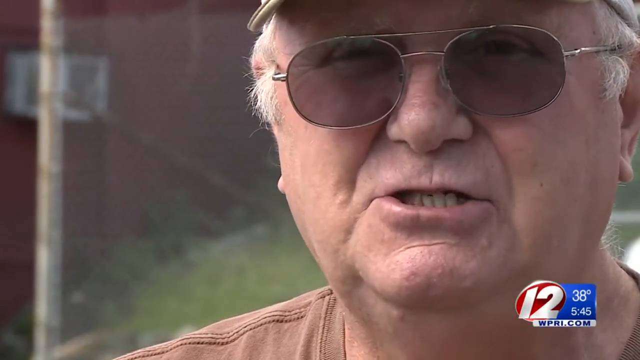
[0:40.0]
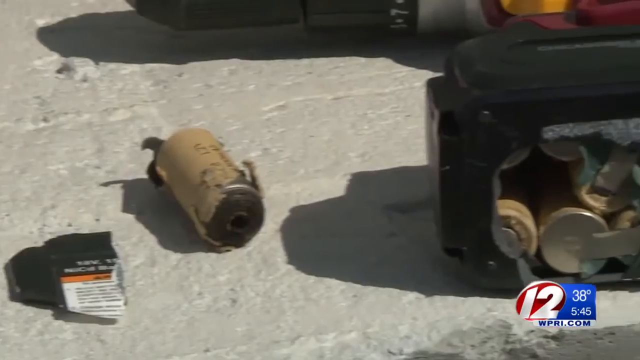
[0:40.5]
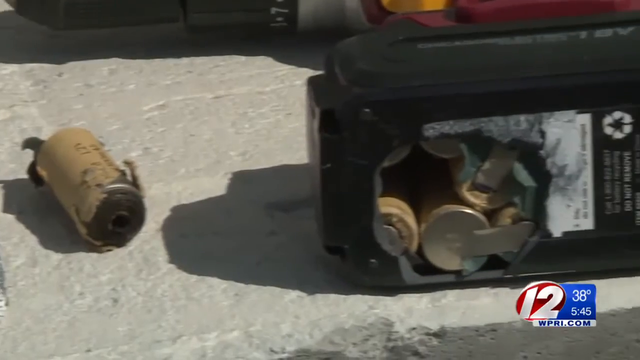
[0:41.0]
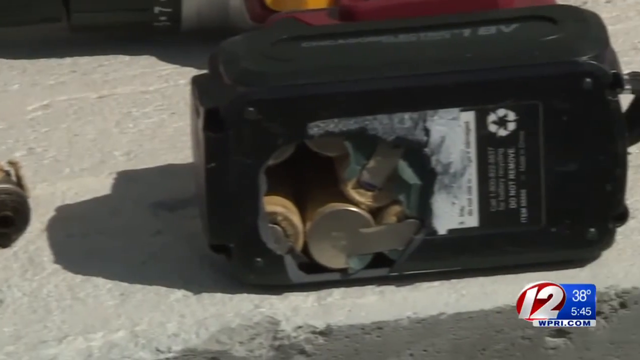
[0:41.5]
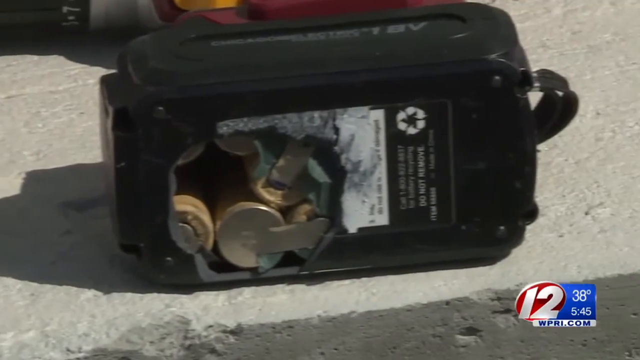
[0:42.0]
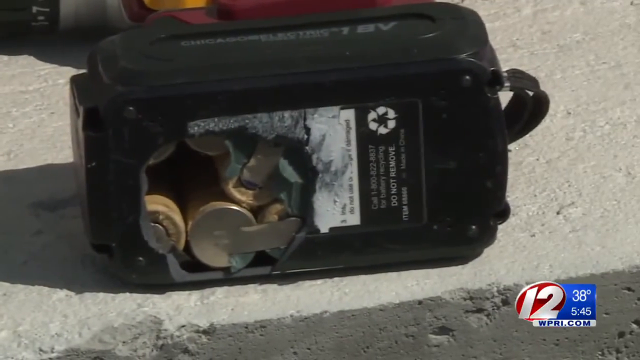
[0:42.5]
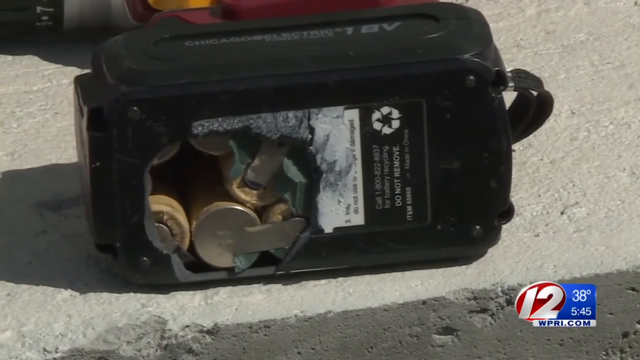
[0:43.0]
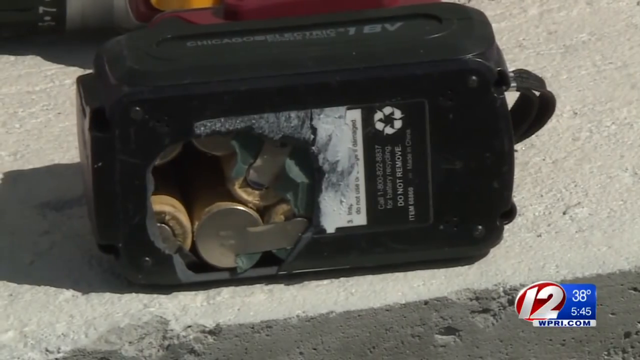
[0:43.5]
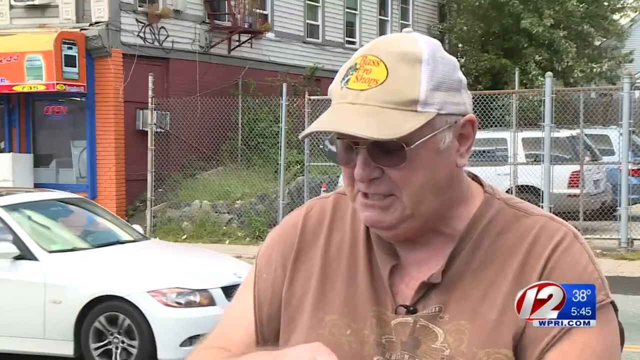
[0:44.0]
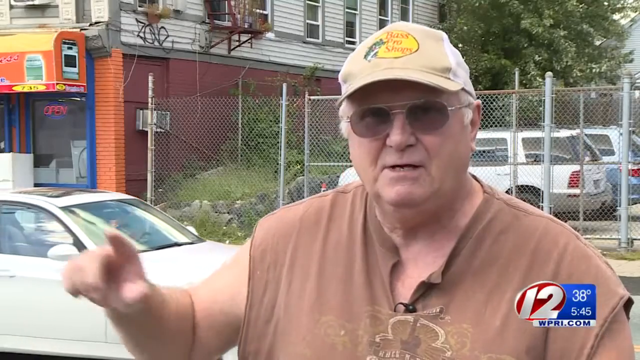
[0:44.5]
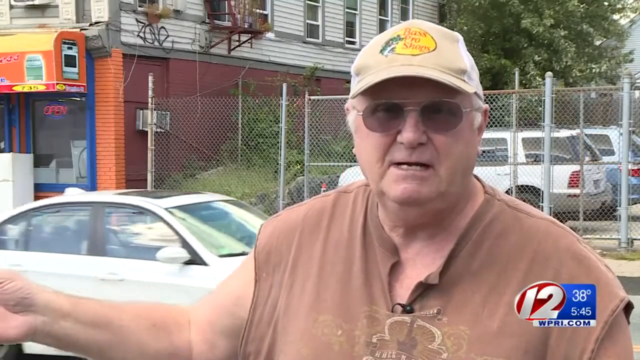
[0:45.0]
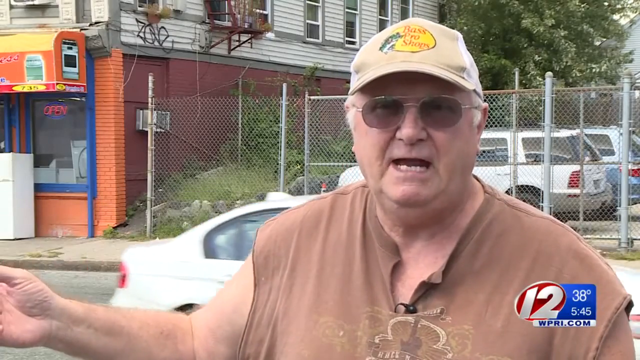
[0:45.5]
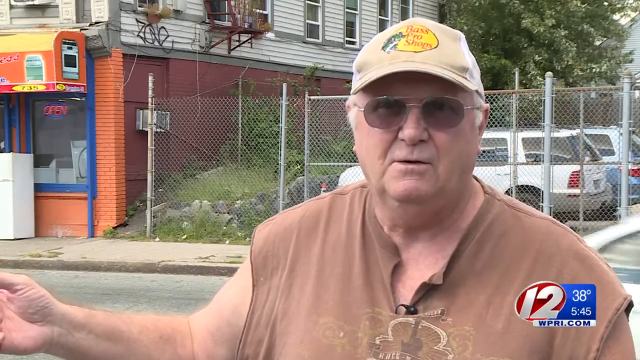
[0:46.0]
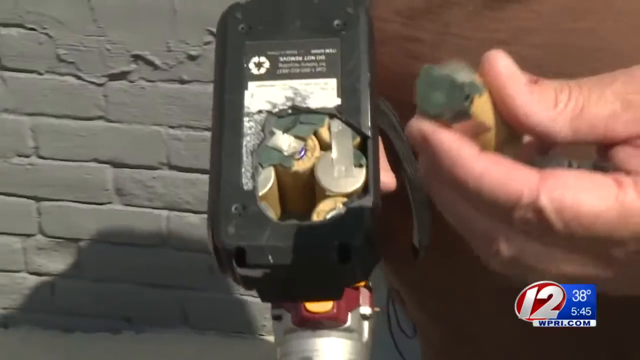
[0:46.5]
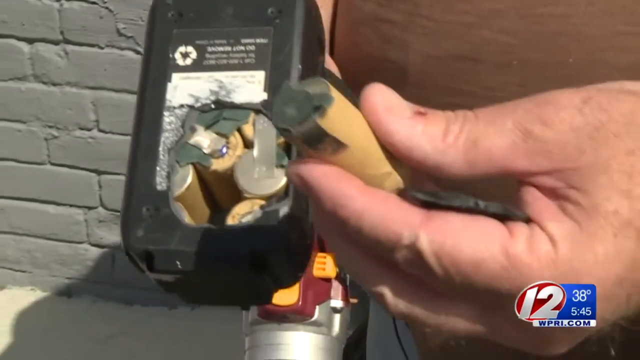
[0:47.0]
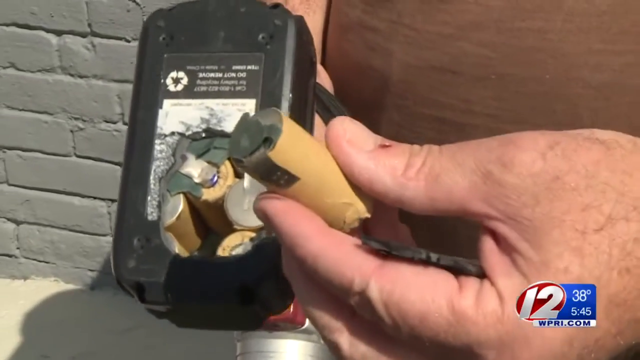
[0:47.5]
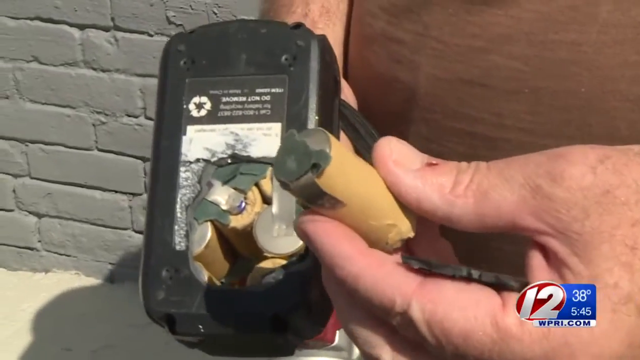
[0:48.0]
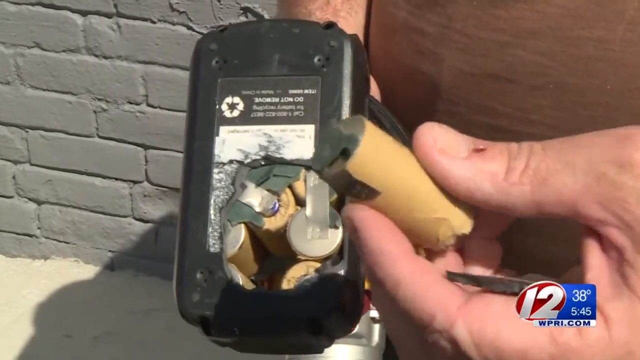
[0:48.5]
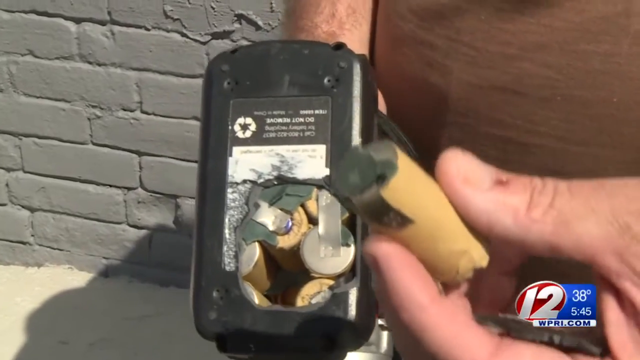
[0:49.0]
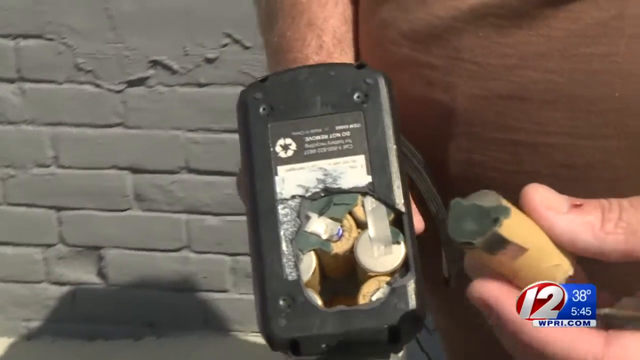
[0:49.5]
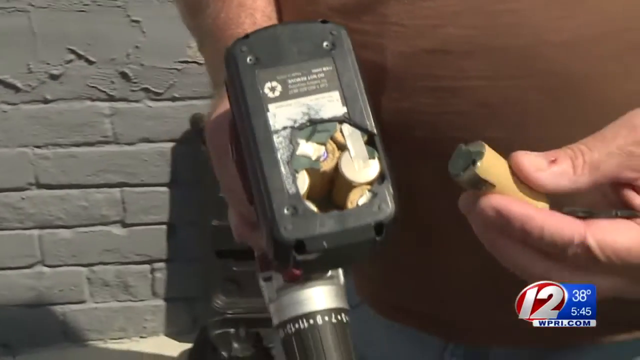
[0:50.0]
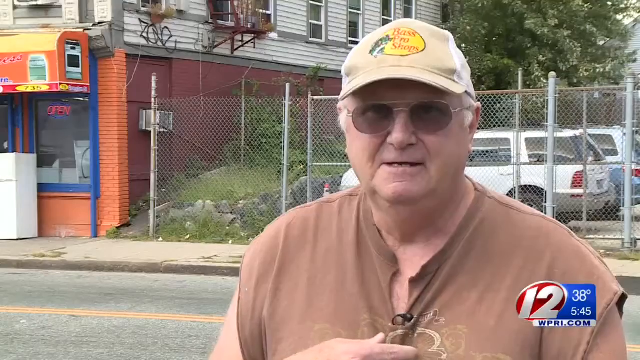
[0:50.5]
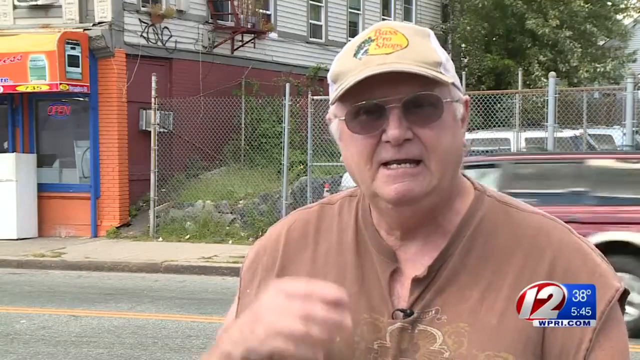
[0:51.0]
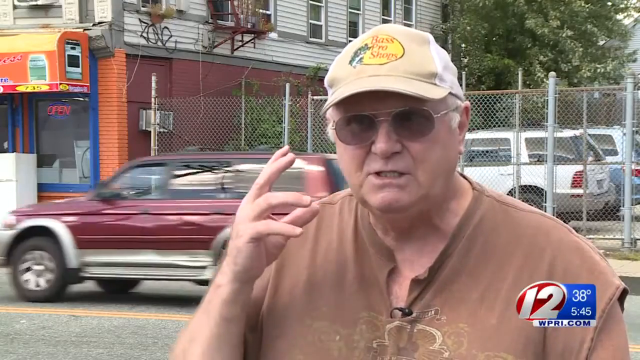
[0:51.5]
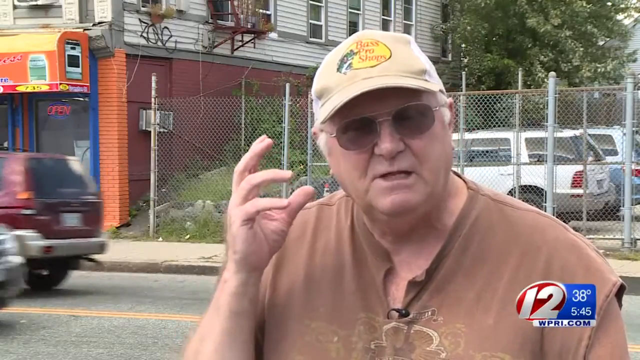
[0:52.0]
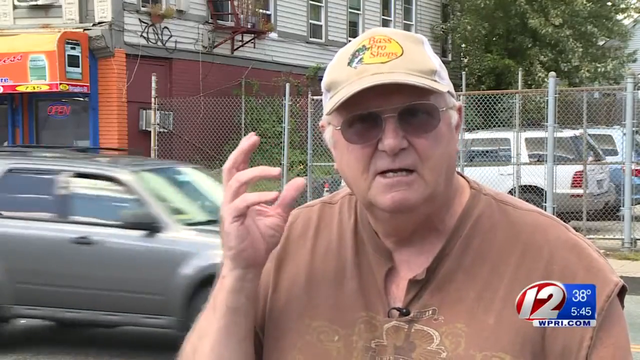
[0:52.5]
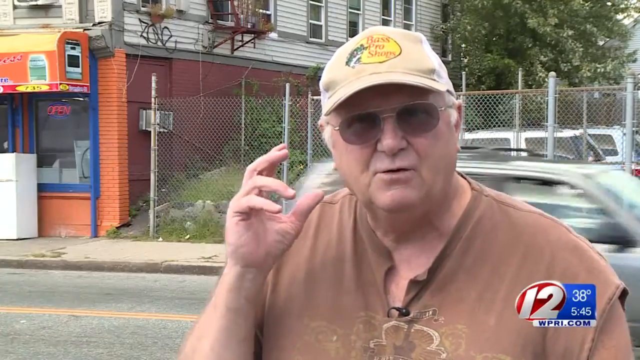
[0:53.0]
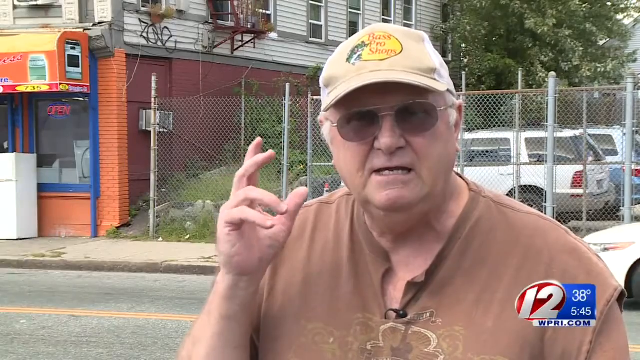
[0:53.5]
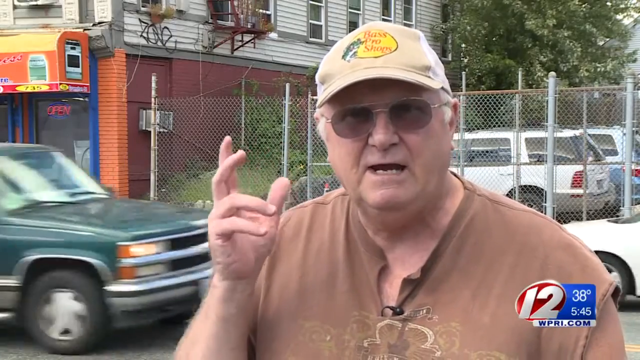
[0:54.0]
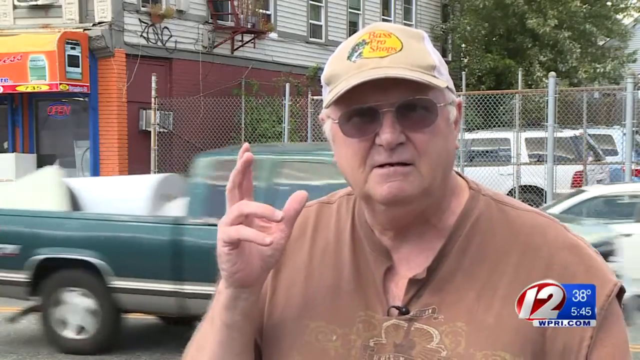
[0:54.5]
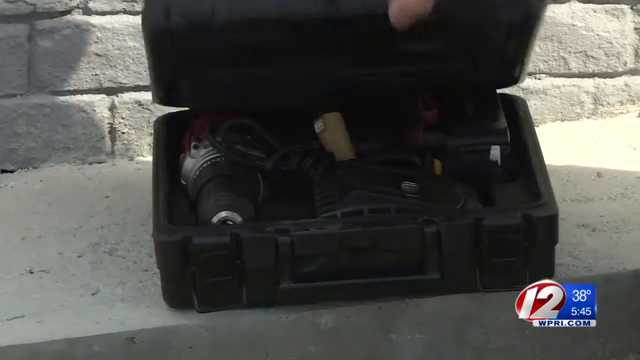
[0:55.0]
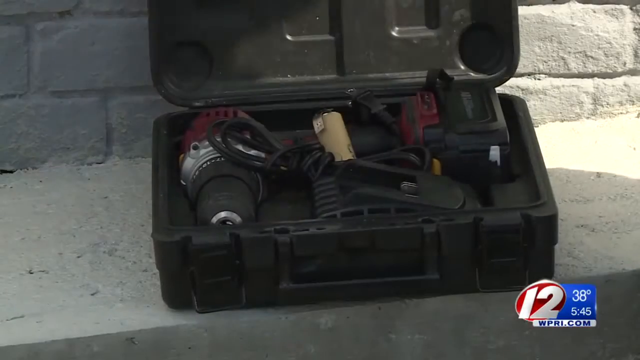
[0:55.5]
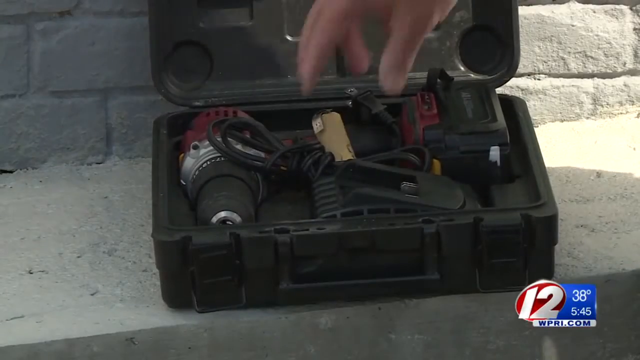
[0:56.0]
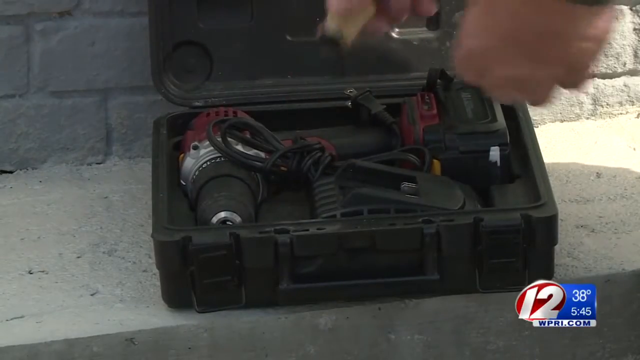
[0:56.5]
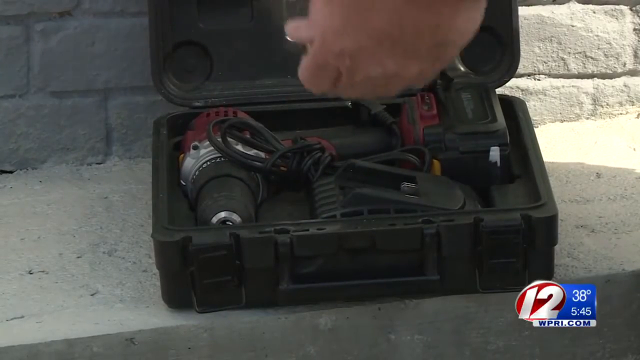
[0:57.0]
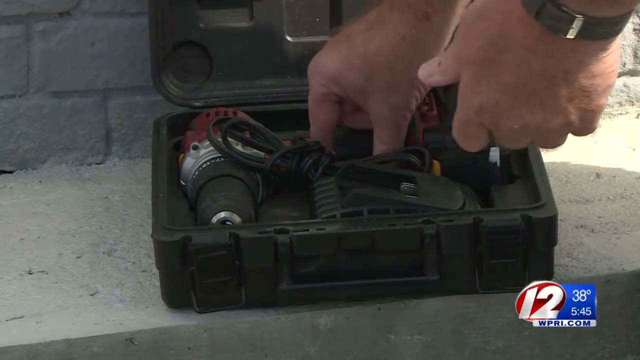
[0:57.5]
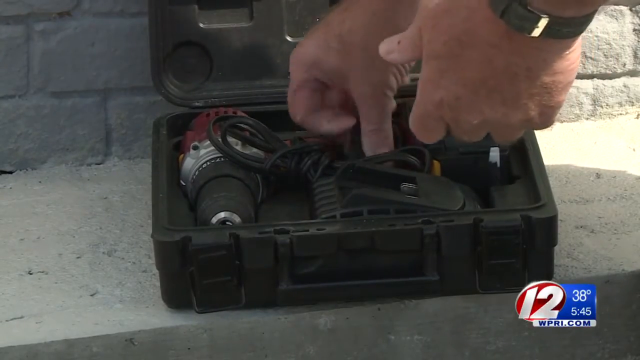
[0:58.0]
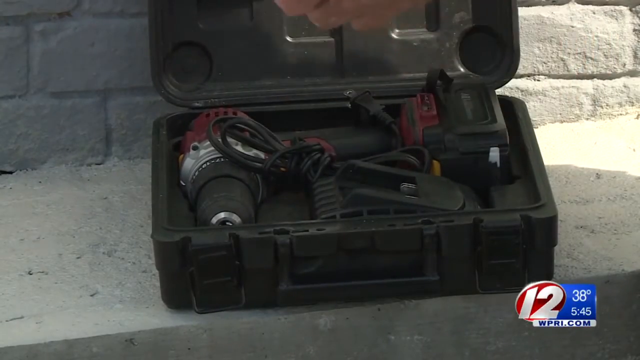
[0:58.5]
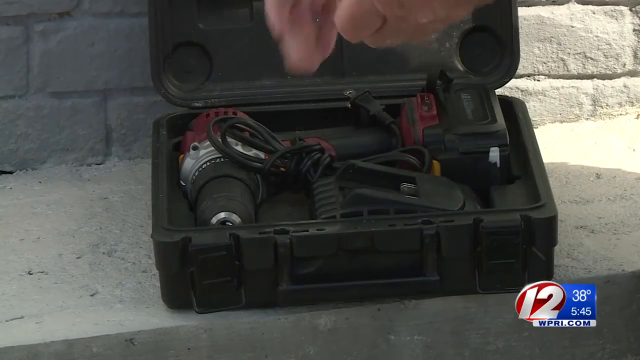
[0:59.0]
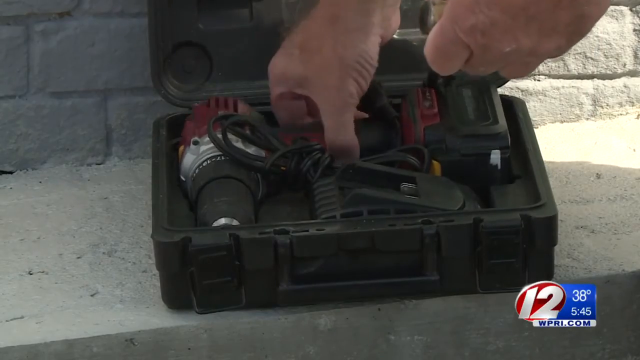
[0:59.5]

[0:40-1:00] A zoomed-in shot shows the same elderly man, who appears to be interviewed on the street; only his eyes down to his chin are visible, and he looks to be wrapping up what he is saying to the camera. The video quickly cuts to a left-to-right pan across what looks like a broken box lying on the floor, possibly something of the man's that was broken. The camera focuses on this black box on the floor, its bottom open and broken. It then cuts back to the man standing on the side of the street being interviewed. He gestures with his right hand, pointing toward the left side as if referencing something that happened there. Behind him, a white car, which looks like a white sedan, drives from left to right along the street. The man nods, and the video cuts to a close-up of his fingers holding what looks like possibly a bullet or a bullet casing between his left thumb and forefinger.